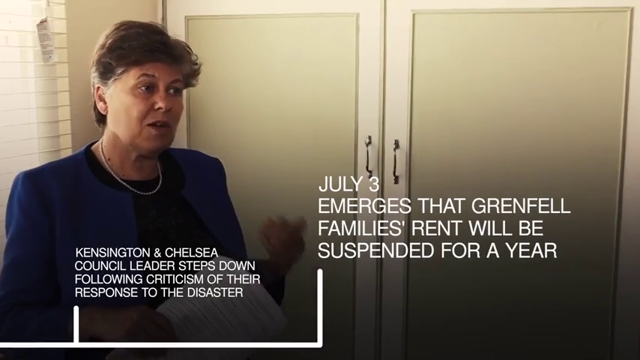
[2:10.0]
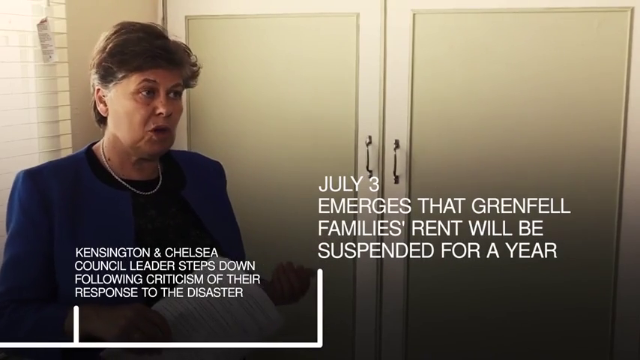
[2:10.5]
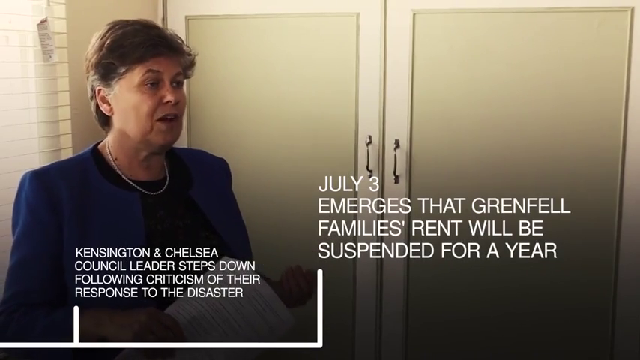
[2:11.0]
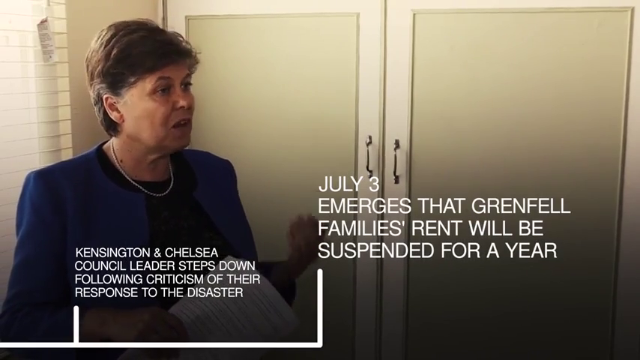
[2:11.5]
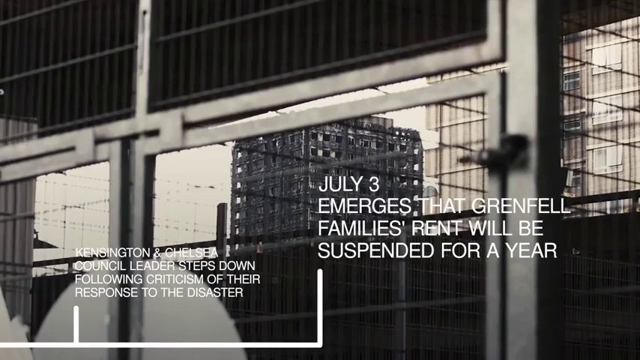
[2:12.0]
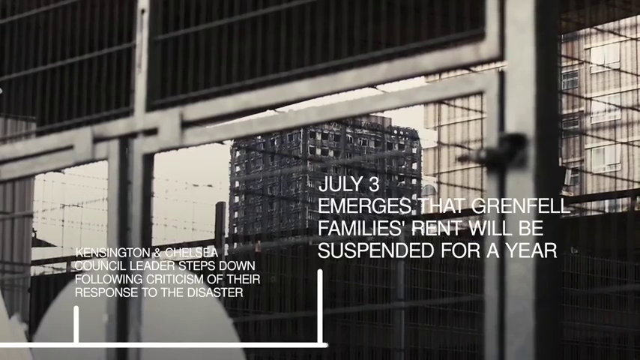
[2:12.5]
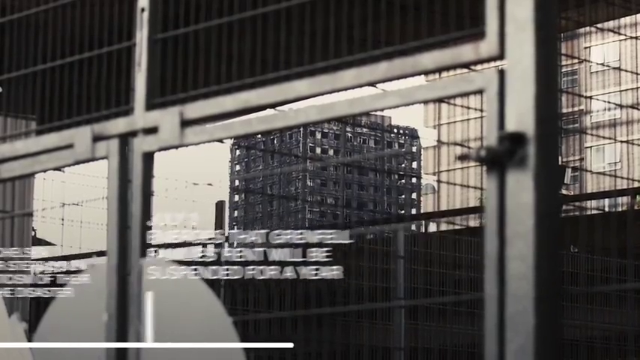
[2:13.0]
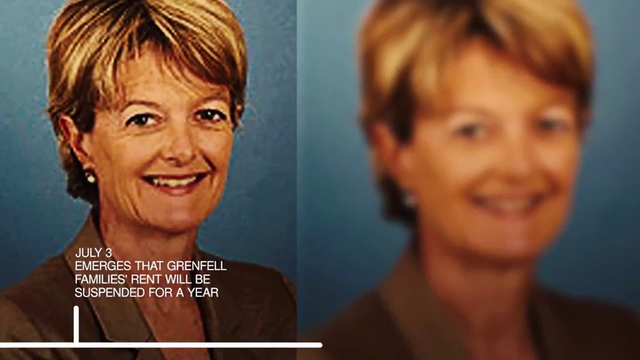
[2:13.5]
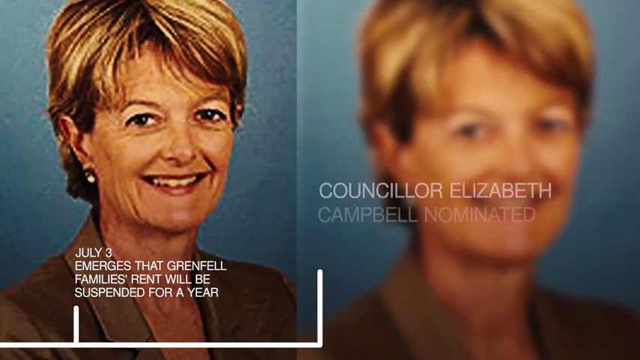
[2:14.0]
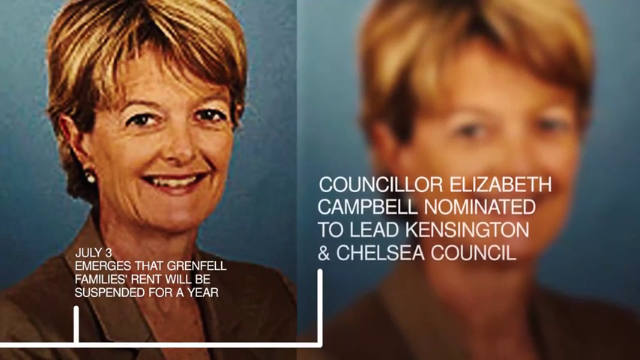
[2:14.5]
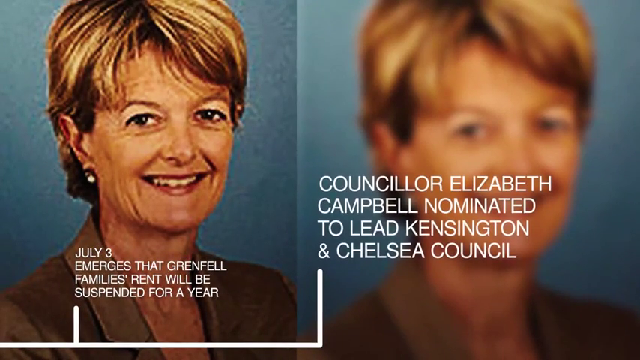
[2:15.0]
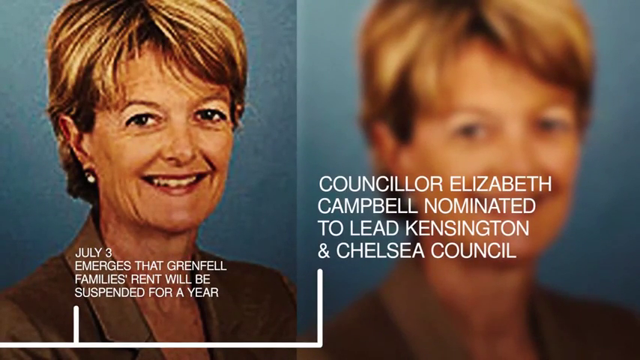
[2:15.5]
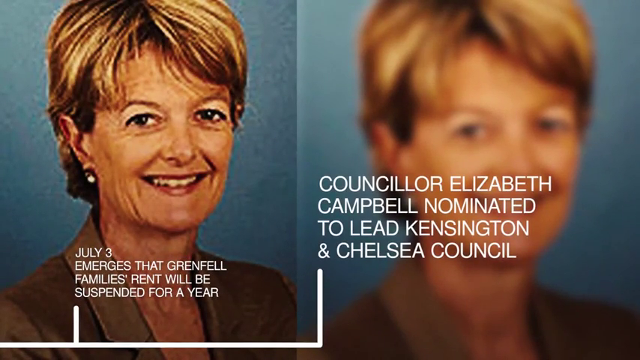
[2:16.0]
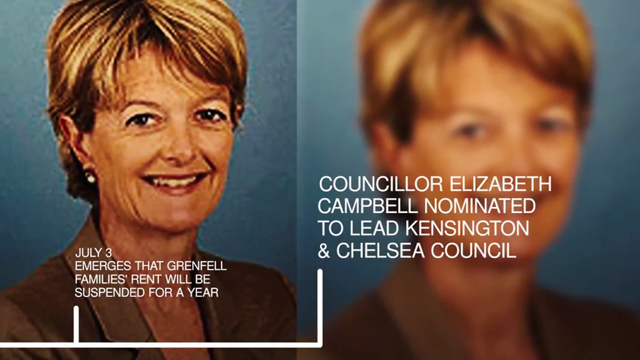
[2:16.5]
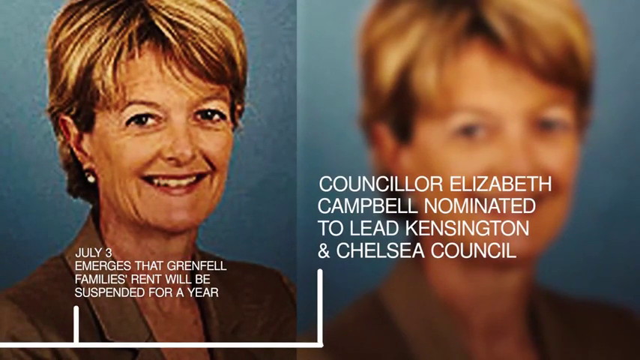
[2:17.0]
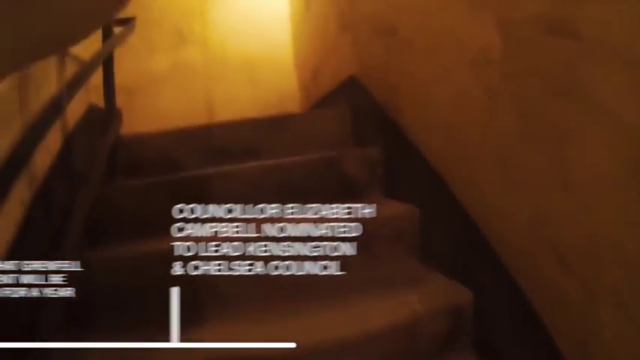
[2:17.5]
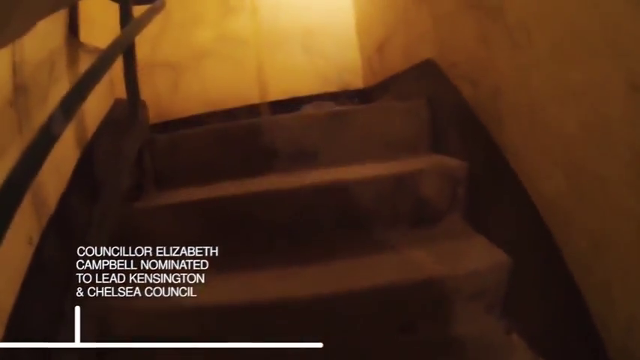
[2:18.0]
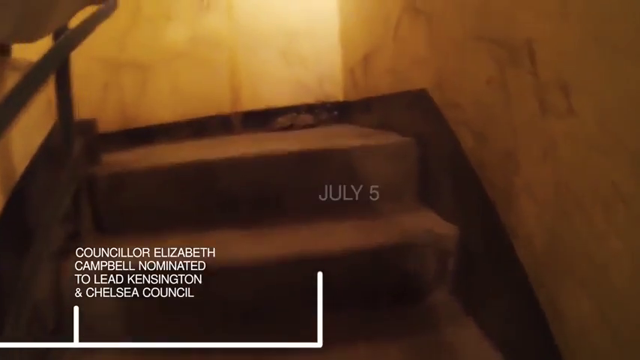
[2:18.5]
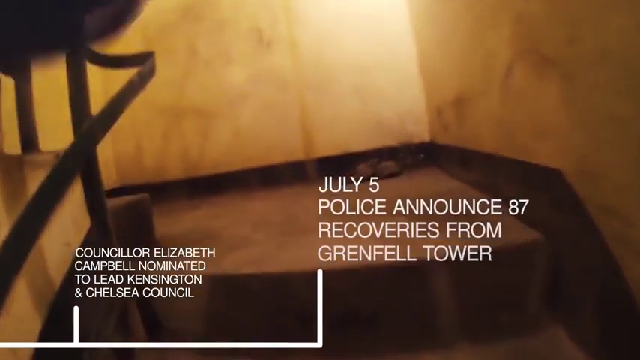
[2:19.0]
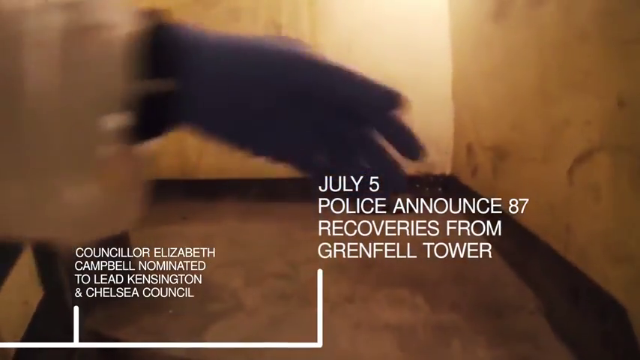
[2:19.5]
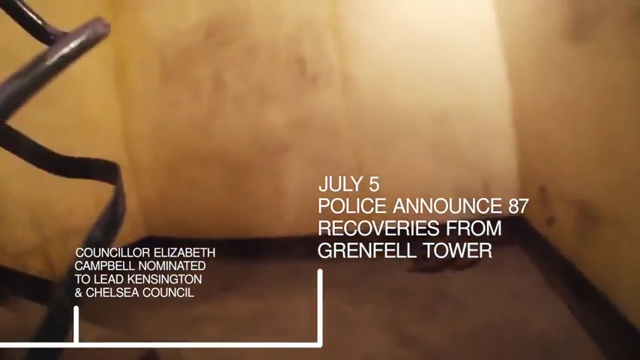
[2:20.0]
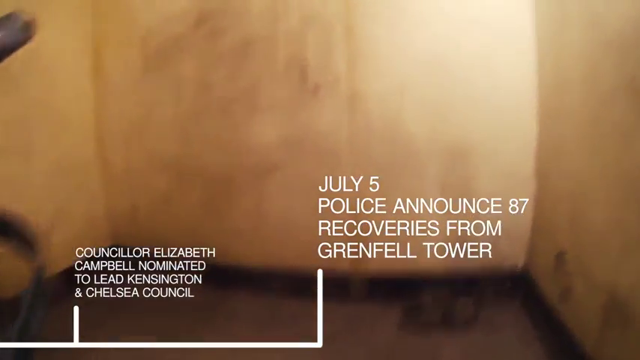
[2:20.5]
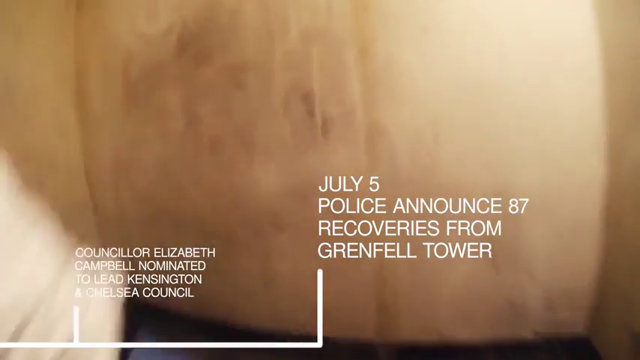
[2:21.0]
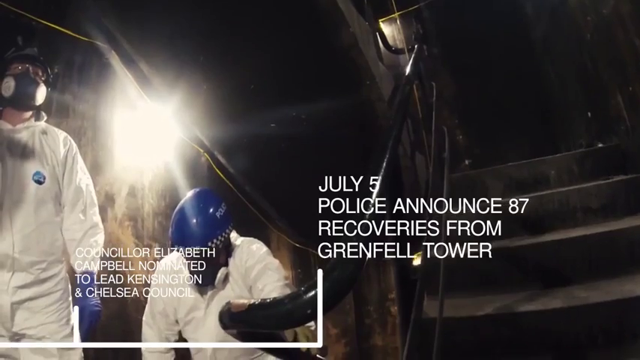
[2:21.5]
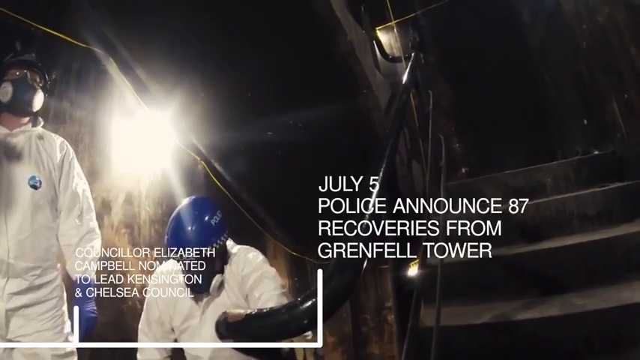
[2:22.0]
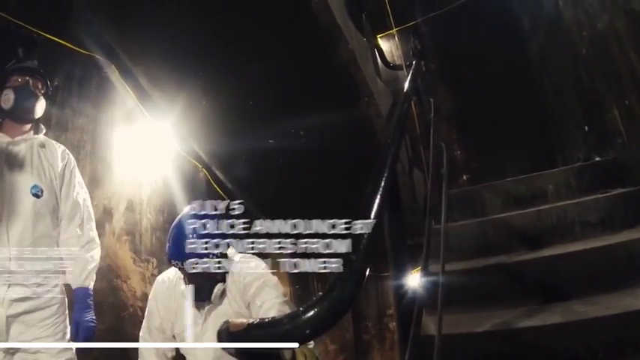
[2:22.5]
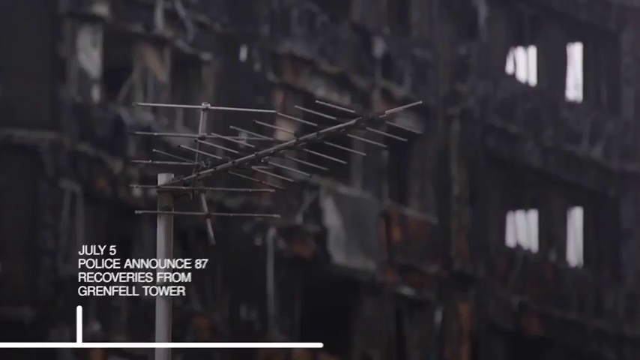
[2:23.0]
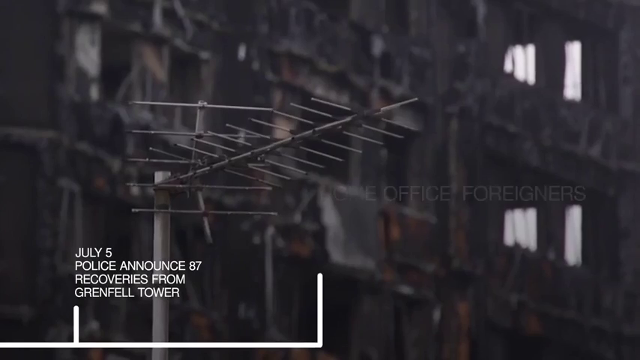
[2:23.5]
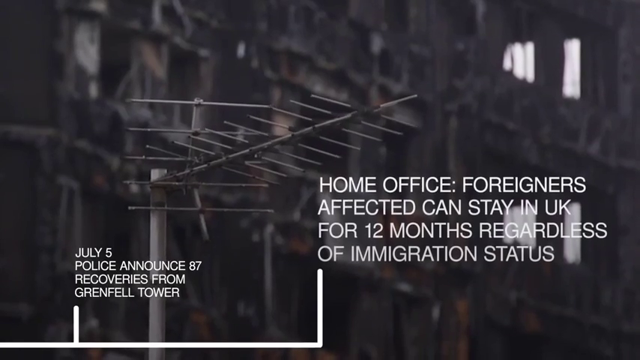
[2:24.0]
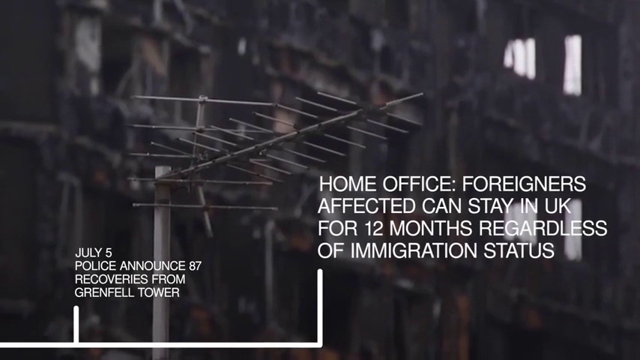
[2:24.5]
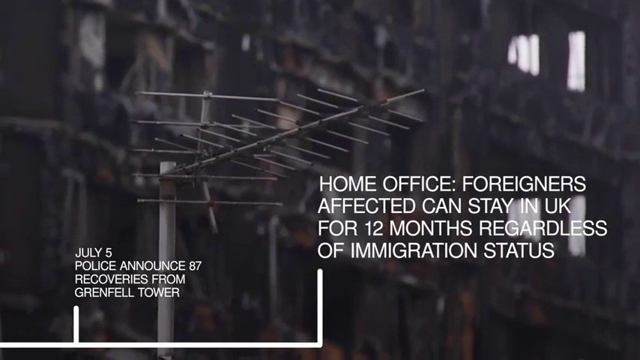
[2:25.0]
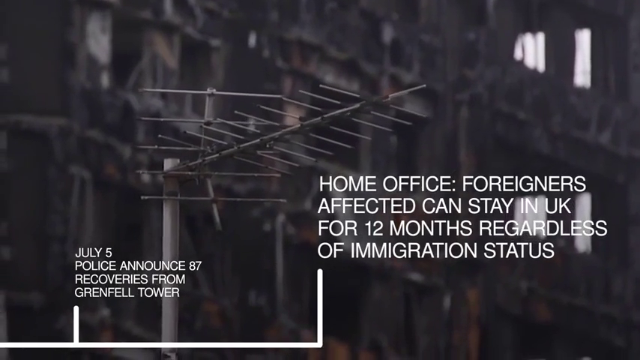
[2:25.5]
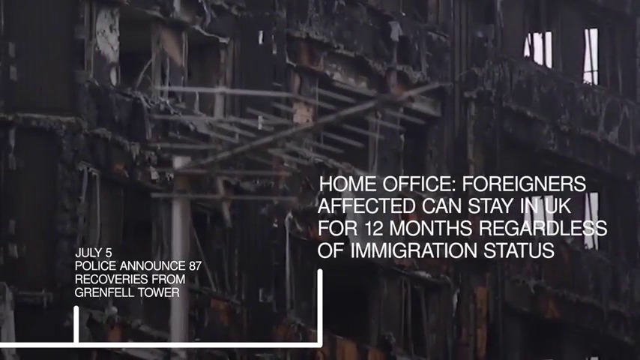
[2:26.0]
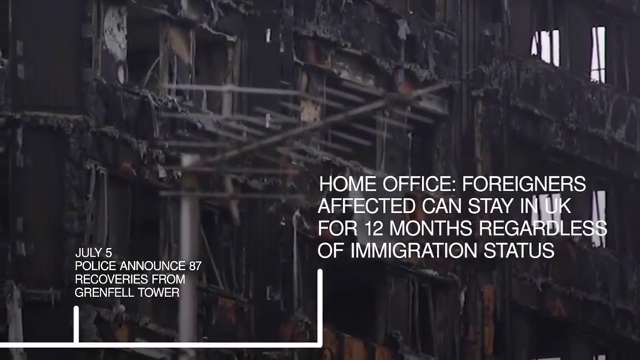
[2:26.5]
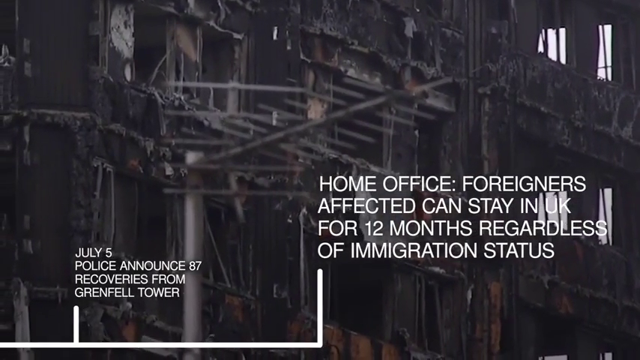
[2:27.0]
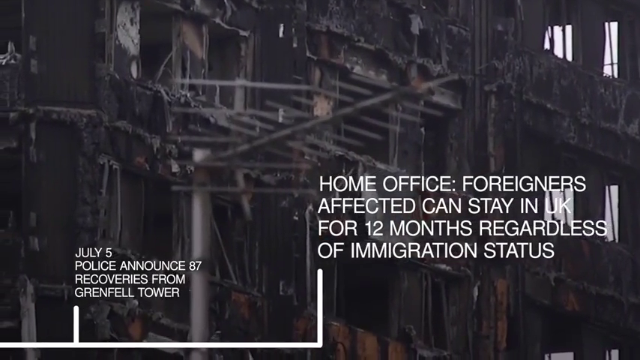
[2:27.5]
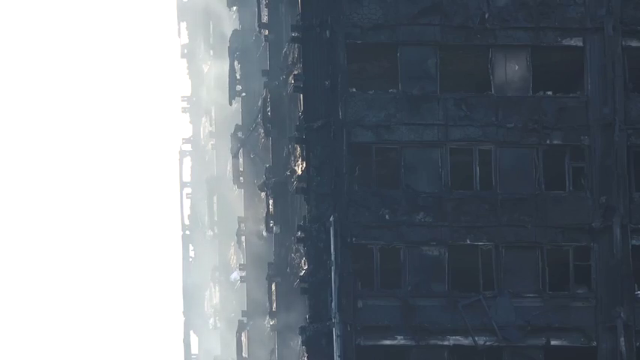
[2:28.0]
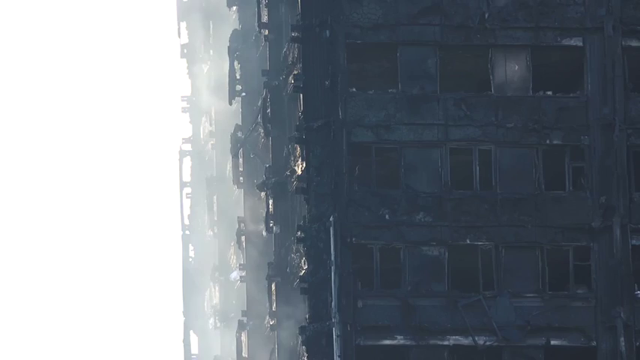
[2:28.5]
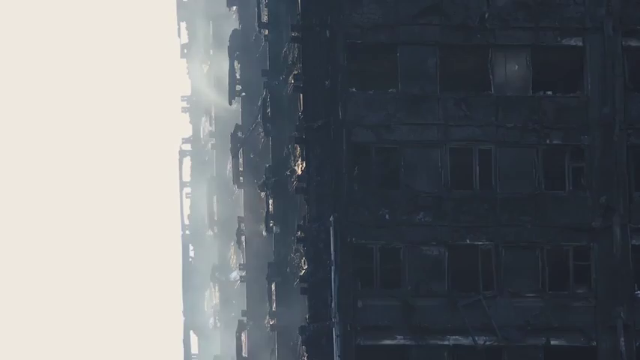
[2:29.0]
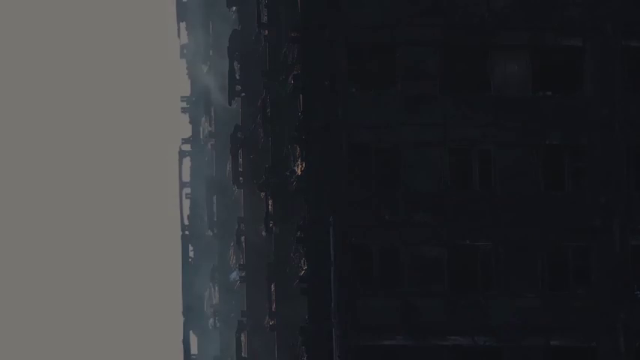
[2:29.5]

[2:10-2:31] The woman is talking, with the text about rent to be "suspended for a year" on screen and doors in the back. The view changes to some kind of railing. The text at the center goes down to the left. An image shows an older woman with short hair, smiling, with pearl earrings, and text reads "Councilor Elizabeth Campbell nominated to lead Kensington and Chelsea Council." The text at the center goes down to the left, small, and there are some stairs that people walk up. Text reads "July 5th, police announce" about Grenfell Tower as she walks up the stairs. Someone is at the lower left. Two people appear to have gas masks and helmets and are wearing white hazmat suits. The text at the center goes down to the left and shrinks, and new text appears to swipe in, down and up, about the Home Office, mentioning "12 months." There appears to be some kind of weather vane. The shot shakes slightly and blurs, then the background comes into focus, showing another building.